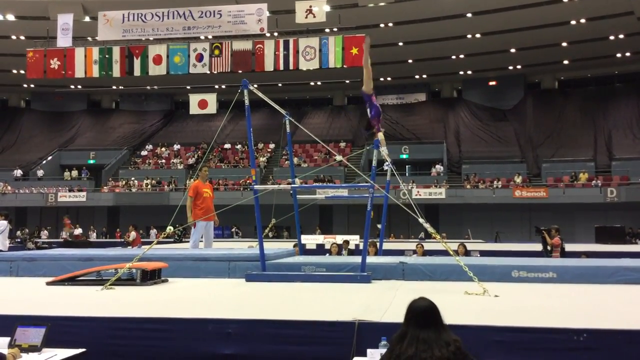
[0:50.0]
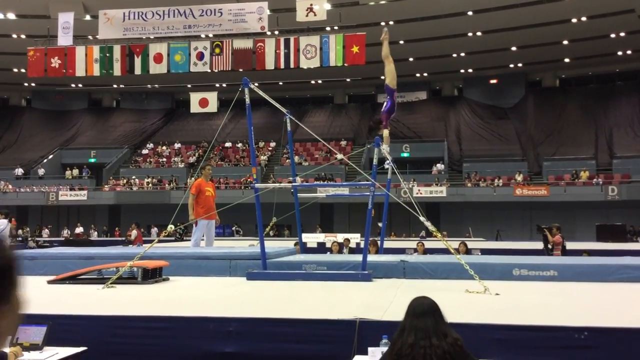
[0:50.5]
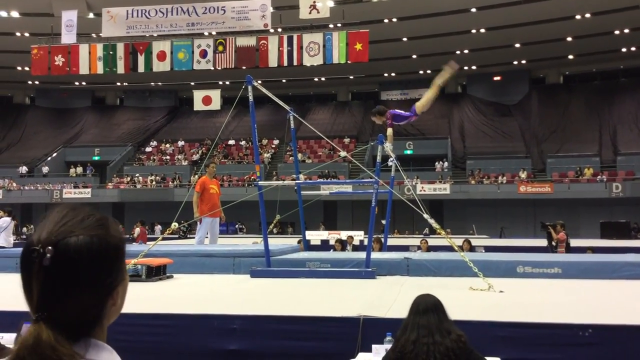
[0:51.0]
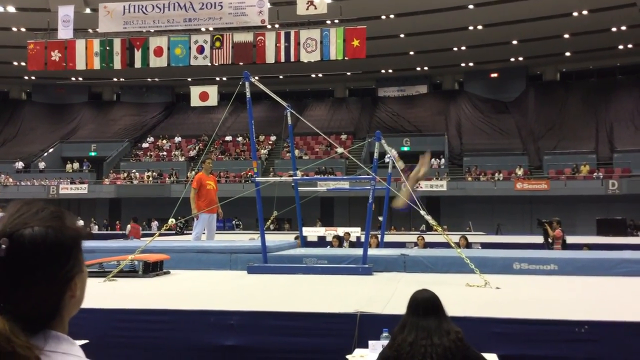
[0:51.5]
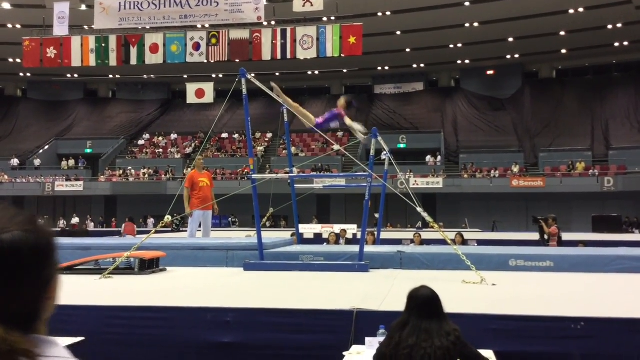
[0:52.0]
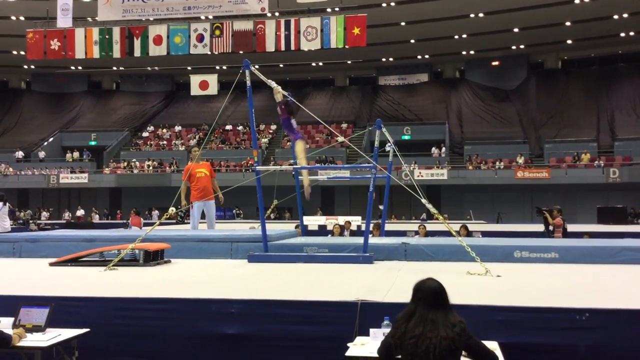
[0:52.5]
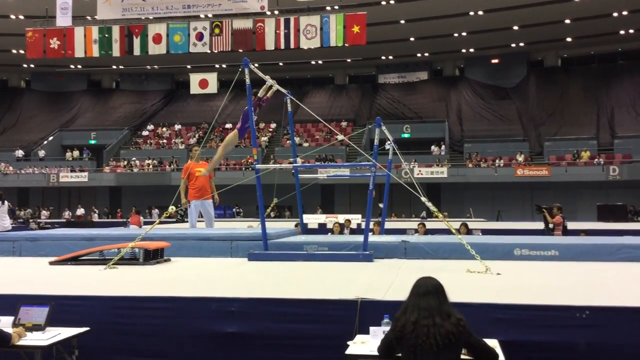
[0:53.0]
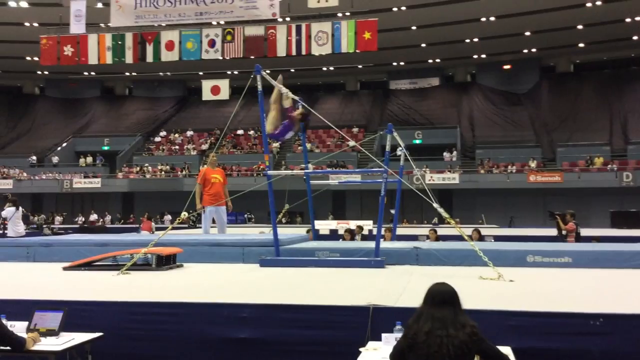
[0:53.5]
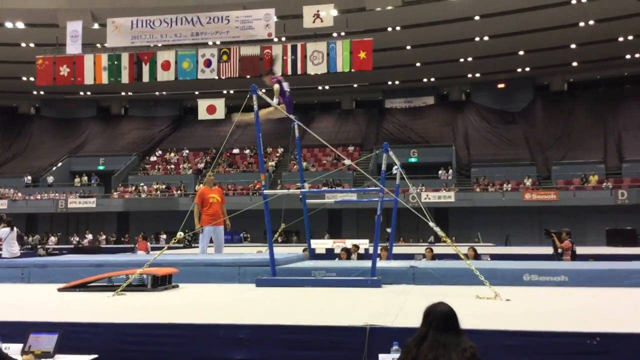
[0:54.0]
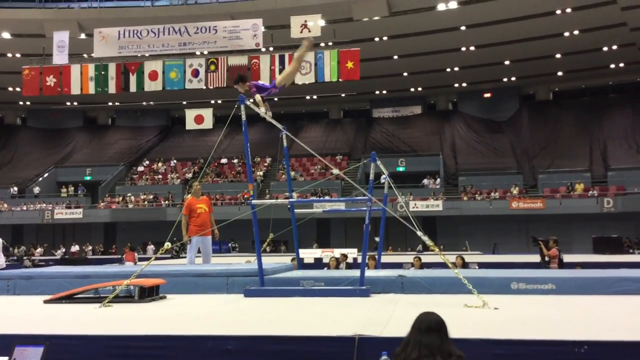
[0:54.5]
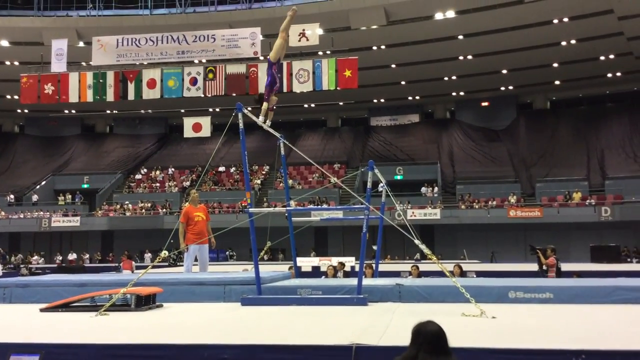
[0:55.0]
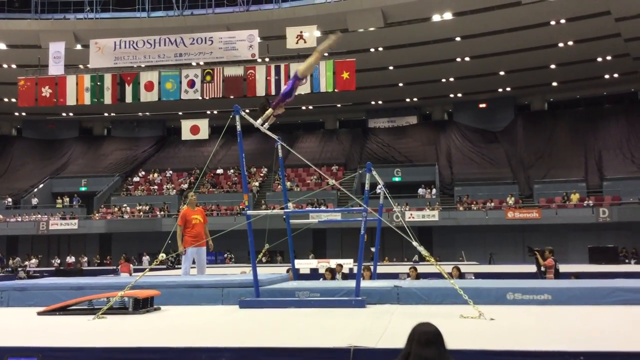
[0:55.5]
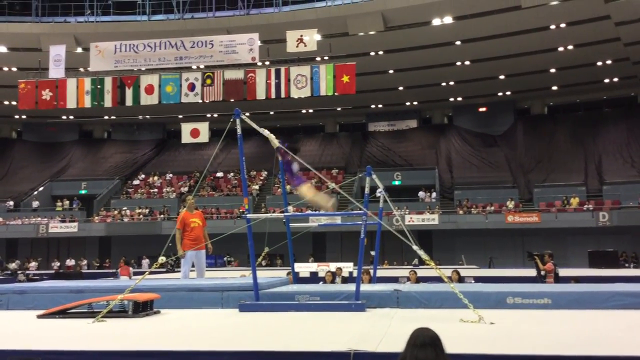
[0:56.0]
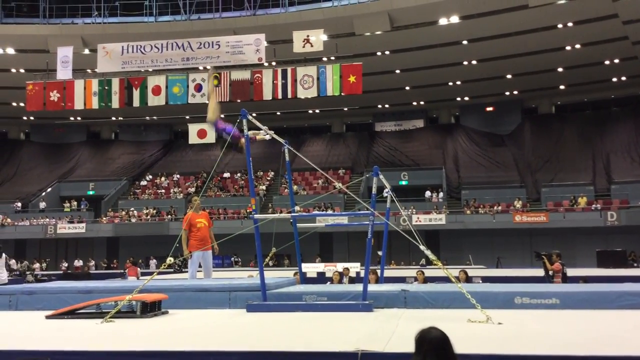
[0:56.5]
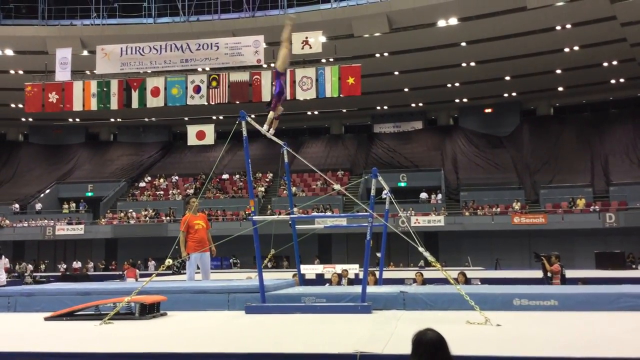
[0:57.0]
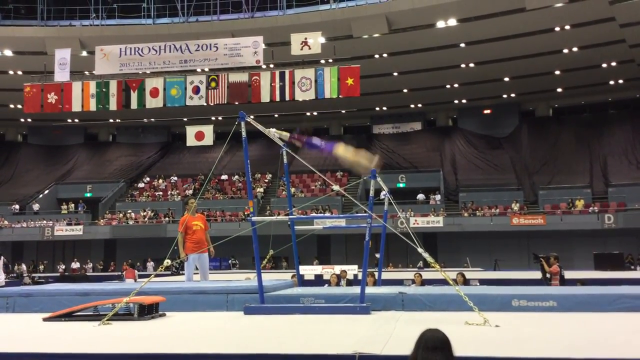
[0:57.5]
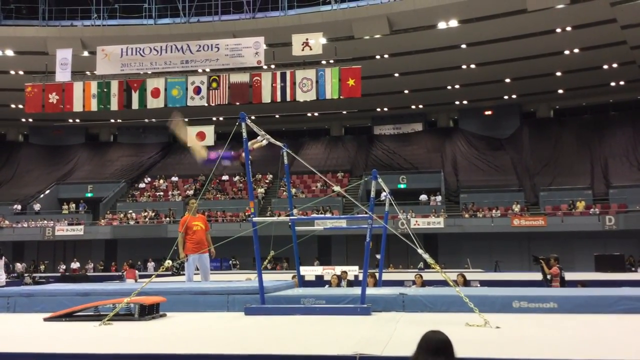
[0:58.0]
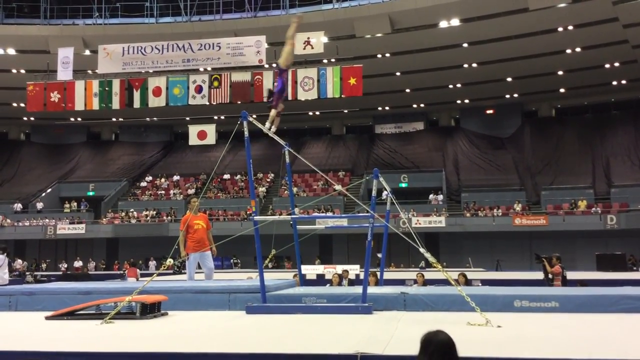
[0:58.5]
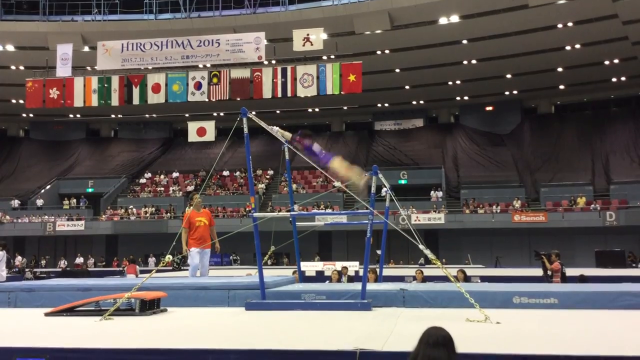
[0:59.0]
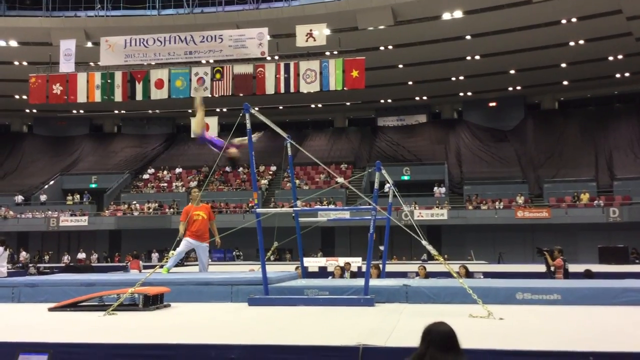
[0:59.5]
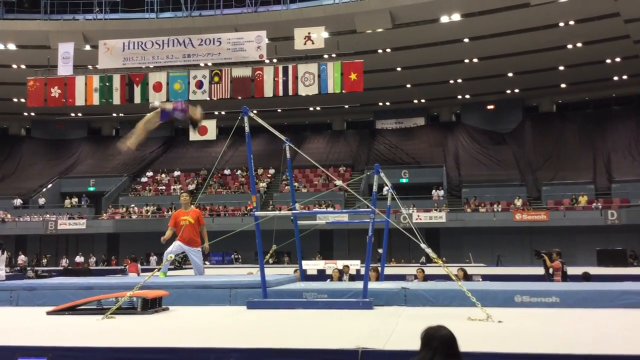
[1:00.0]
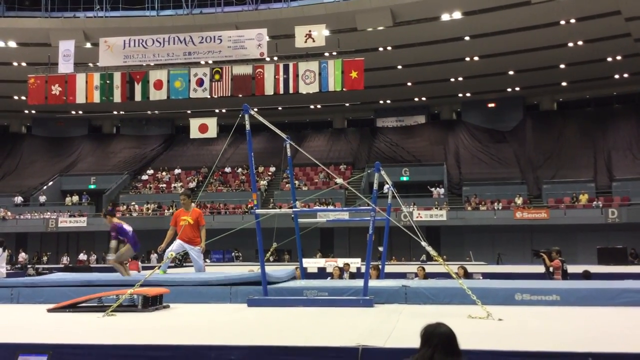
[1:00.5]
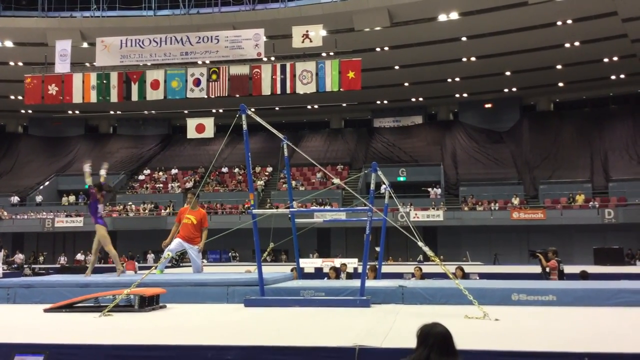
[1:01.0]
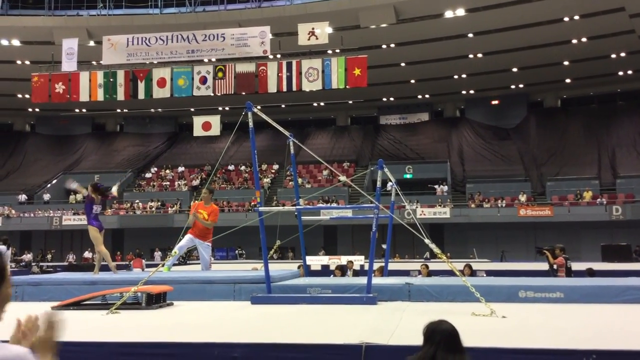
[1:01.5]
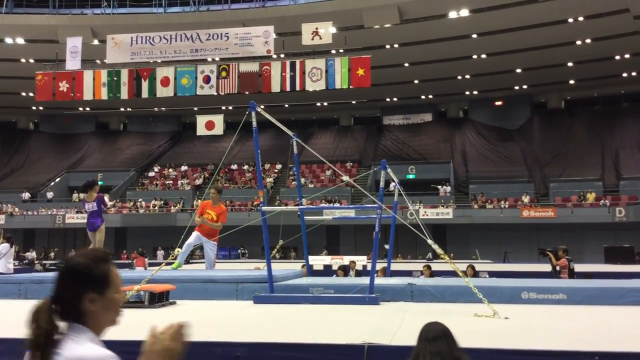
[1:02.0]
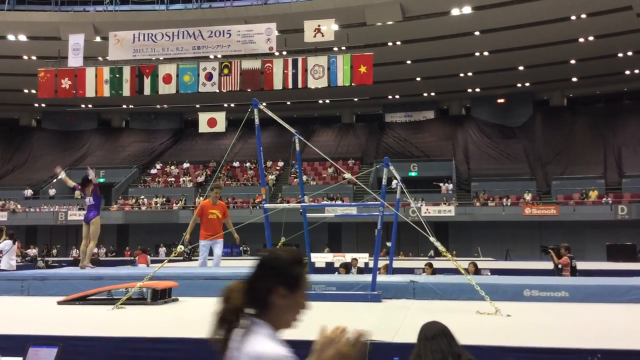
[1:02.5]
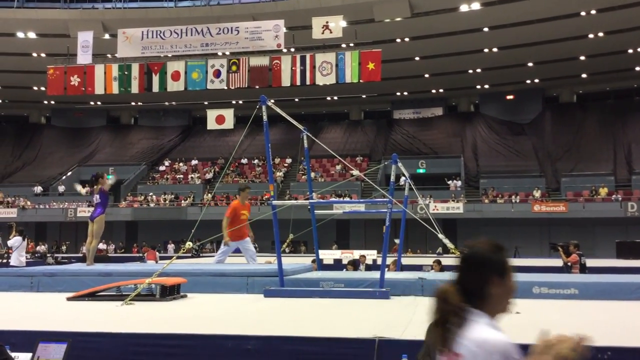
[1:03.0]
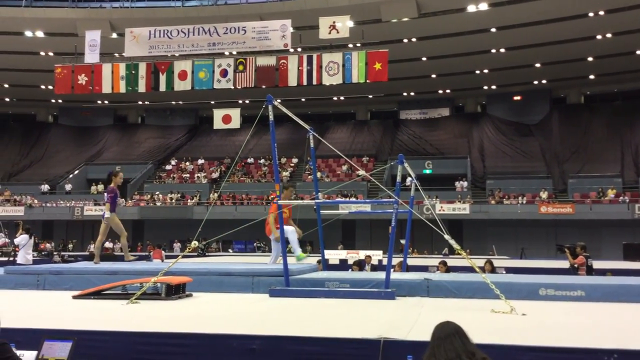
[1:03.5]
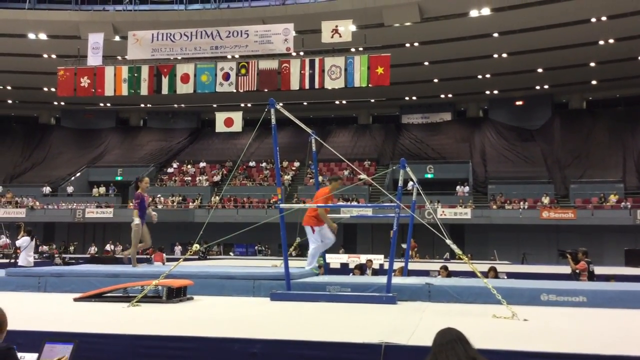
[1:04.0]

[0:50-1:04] A gymnast girl performs on the uneven bars. She is spotted by a coach in the middle of the frame, and another coach on the other side is also spotting her. She does flips, sort of spinning back and twirling in the air as she releases the bar, then comes out and does another flip, comes over, and jumps to the other bar to continue her performance.